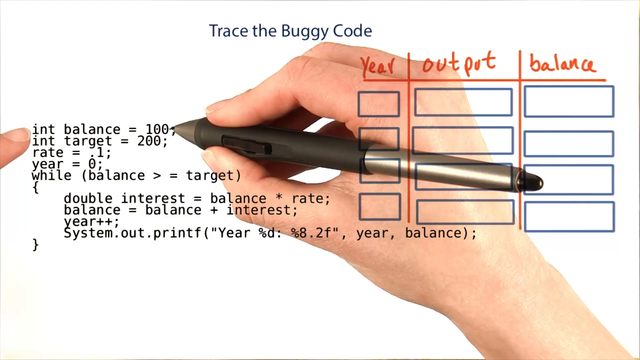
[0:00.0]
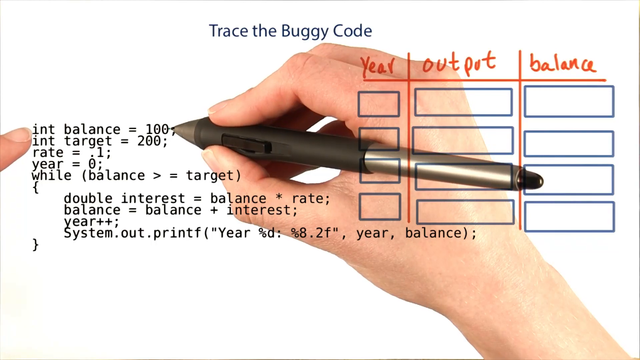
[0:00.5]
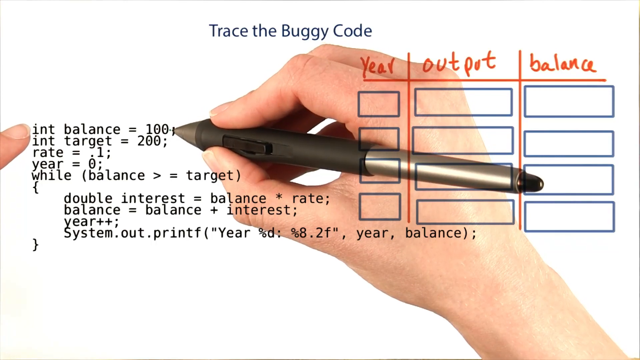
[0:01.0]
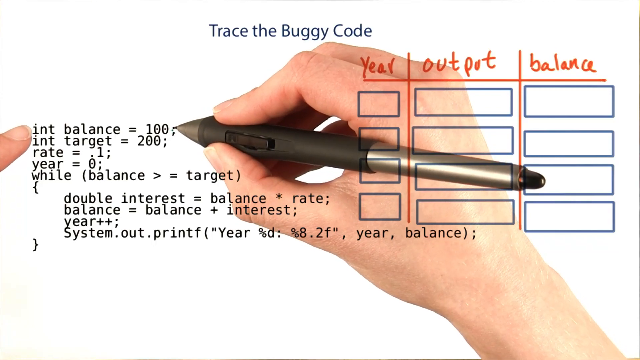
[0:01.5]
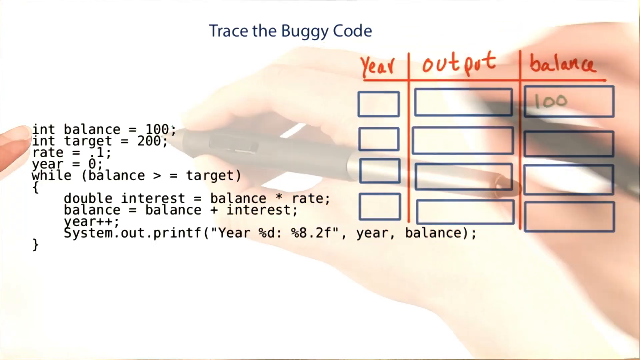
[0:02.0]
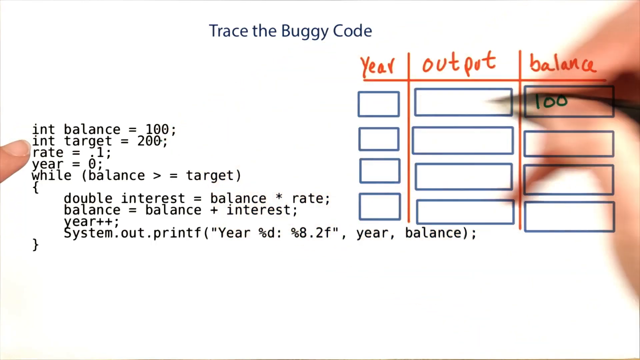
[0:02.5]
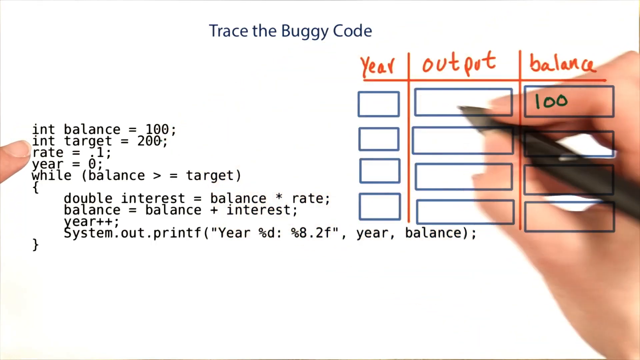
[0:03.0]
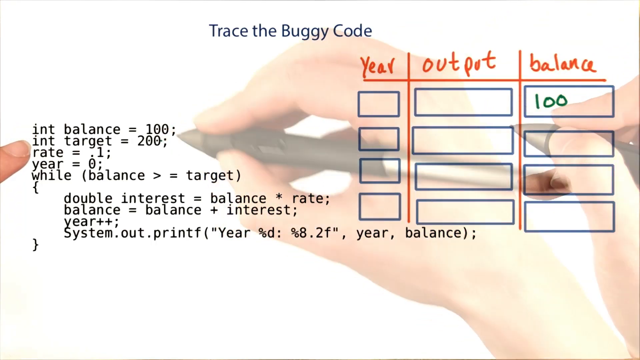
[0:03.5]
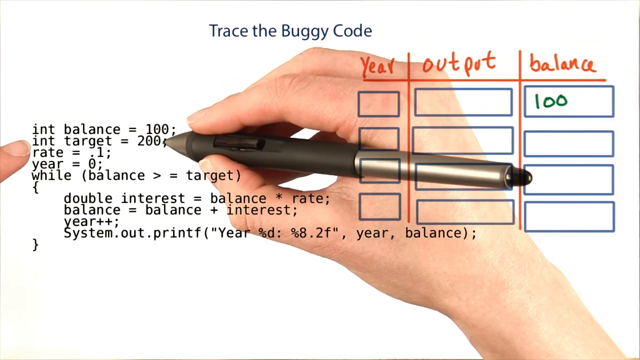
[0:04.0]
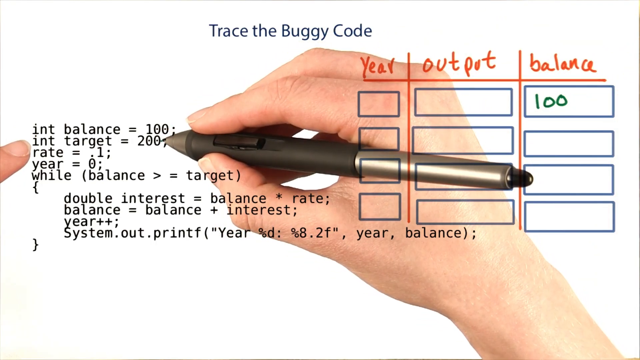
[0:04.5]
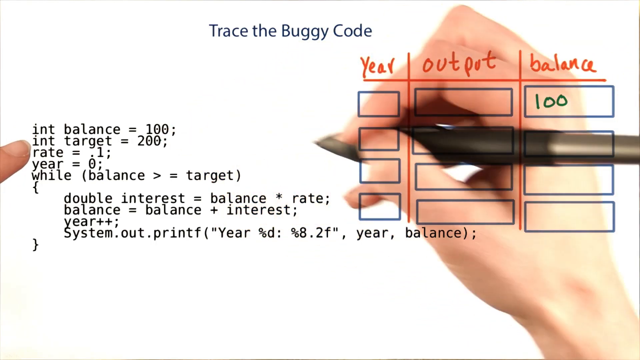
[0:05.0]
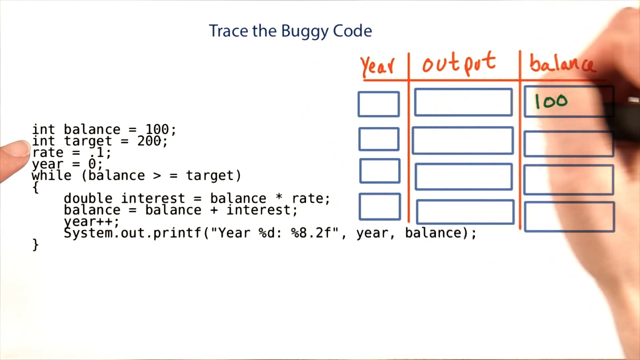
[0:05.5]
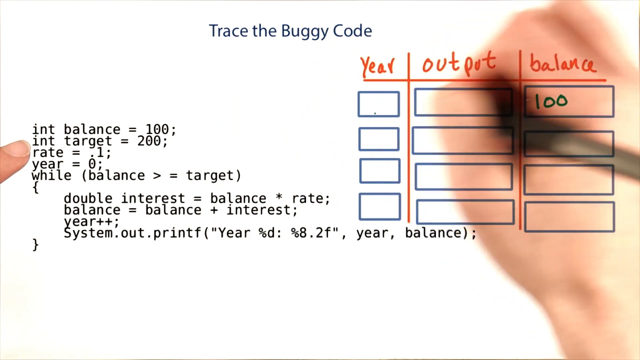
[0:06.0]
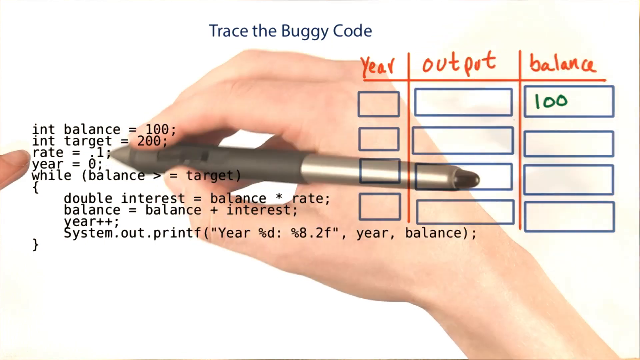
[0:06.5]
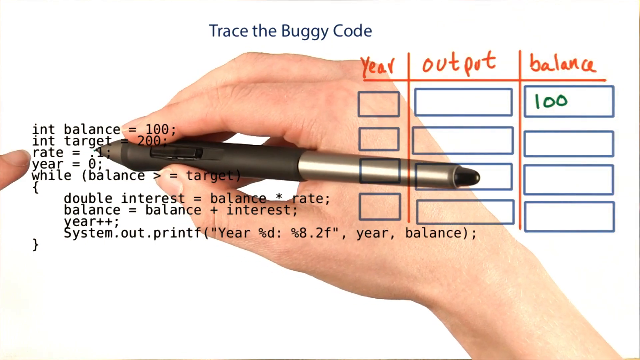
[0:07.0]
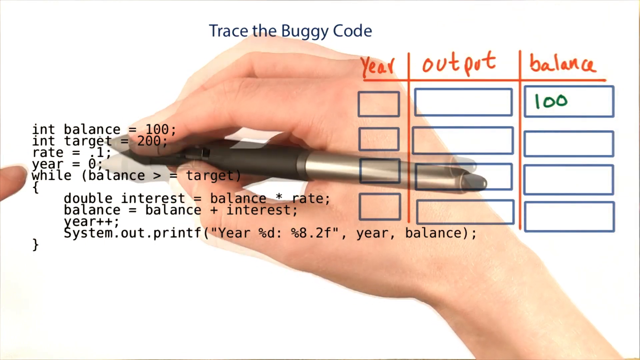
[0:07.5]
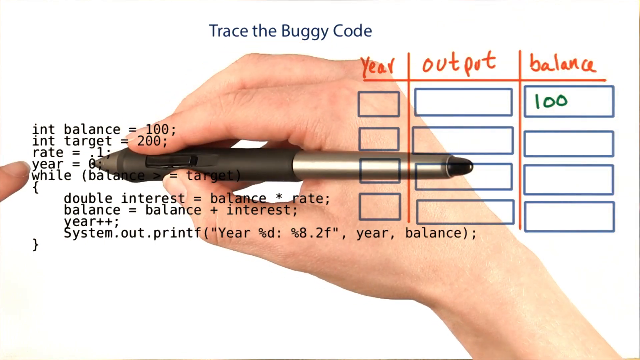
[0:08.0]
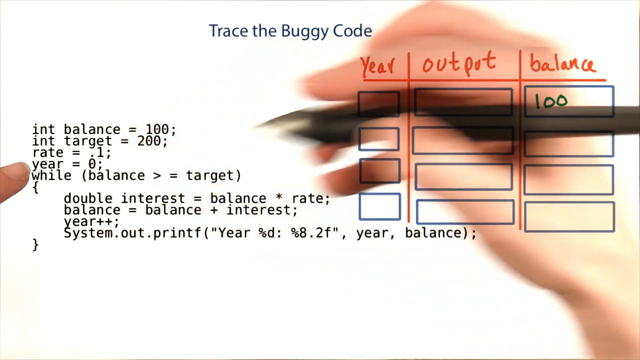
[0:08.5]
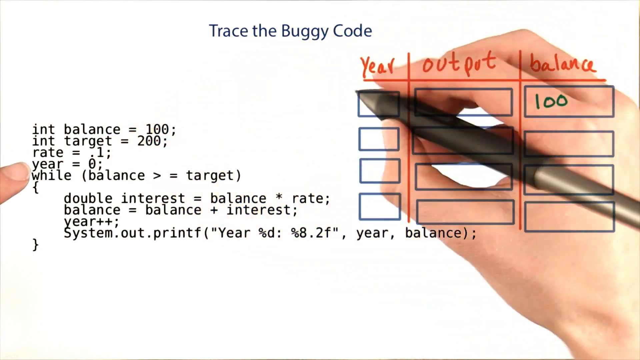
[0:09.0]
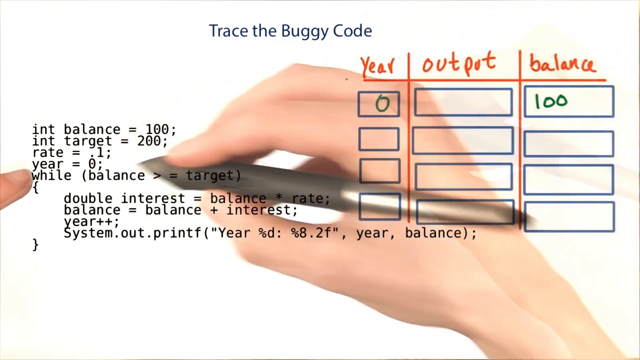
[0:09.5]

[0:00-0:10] Code is shown that declares a few variables, including balance, target, and rate. There is a white background with a pen on it, along with text that says "trace the buggy code" and a table in a column or row format with the entries year, output, and balance. A Caucasian person's hand holds a pen, kind of pointing at some of the variables, including balance, target, rate, and year. A while loop is then shown: while balance is greater than target, double interest equals balance plus rate, balance equals balance plus interest, year++ increments the year variable, and a System.out print outputs the year, formatted in what looks like a Java-style code snippet.